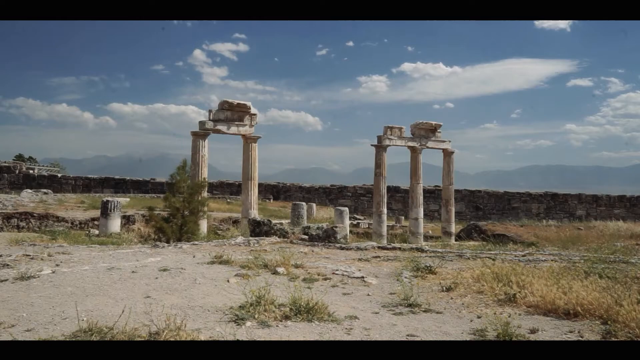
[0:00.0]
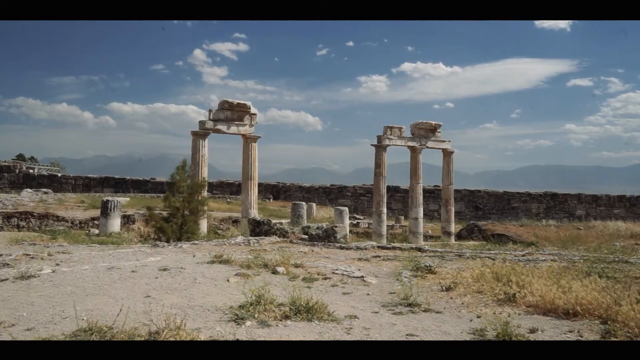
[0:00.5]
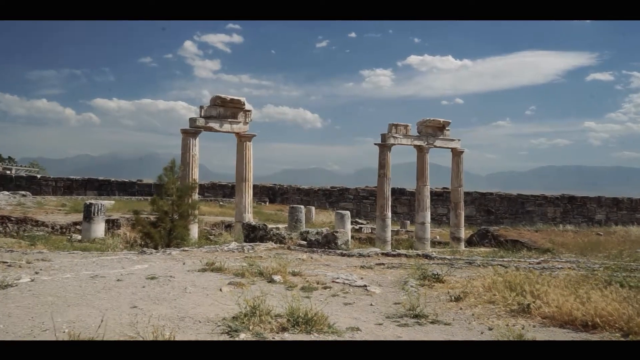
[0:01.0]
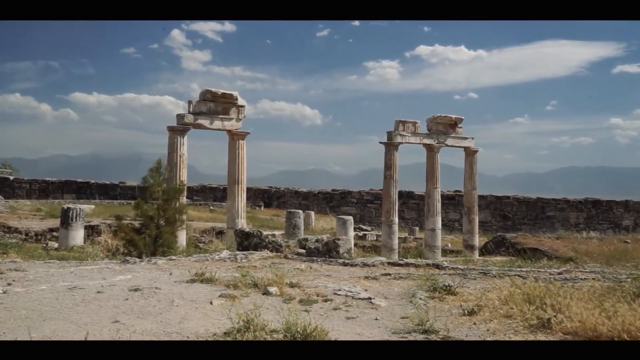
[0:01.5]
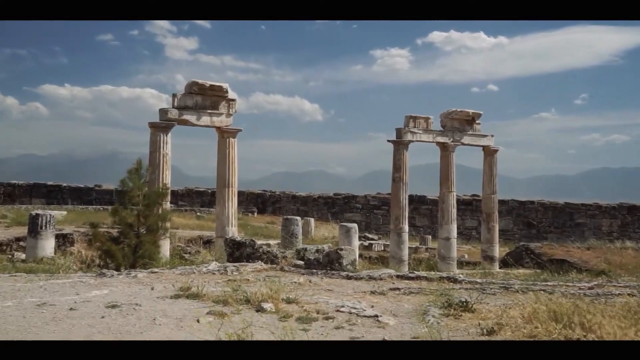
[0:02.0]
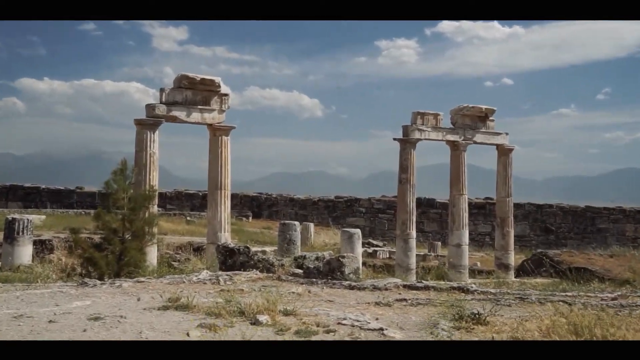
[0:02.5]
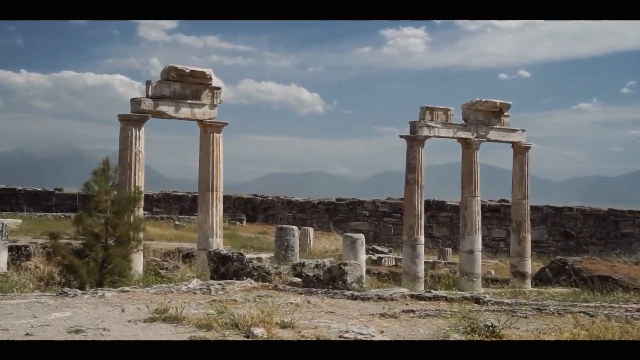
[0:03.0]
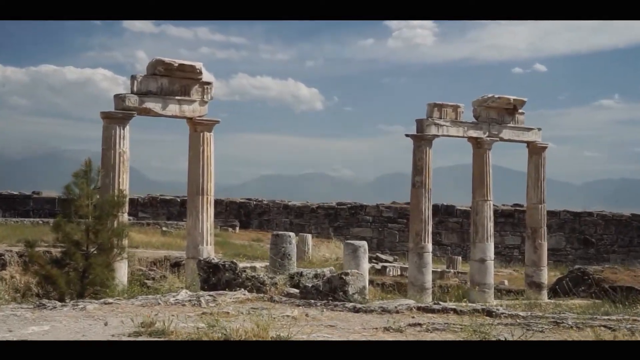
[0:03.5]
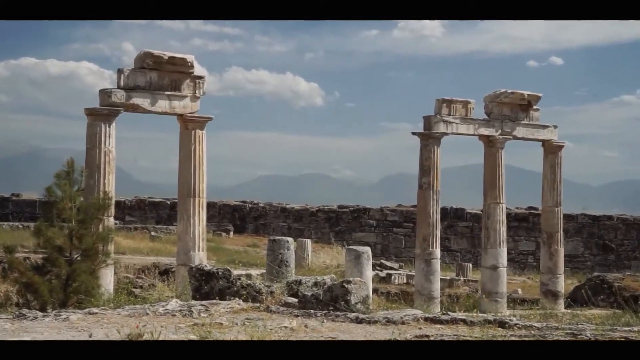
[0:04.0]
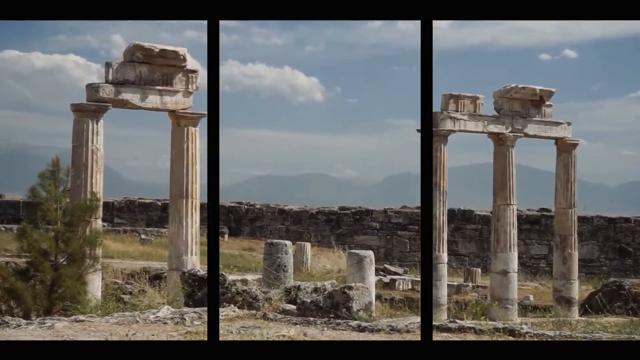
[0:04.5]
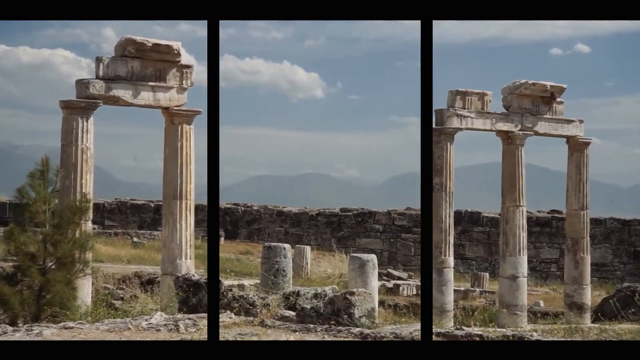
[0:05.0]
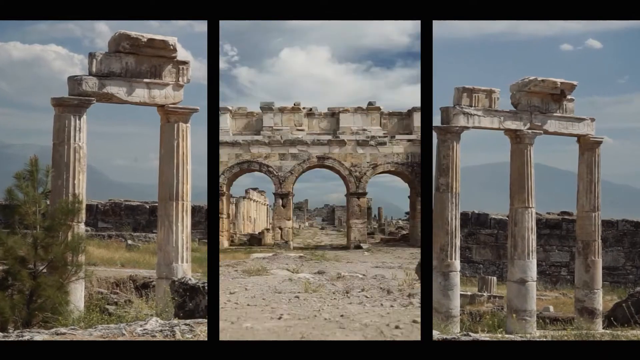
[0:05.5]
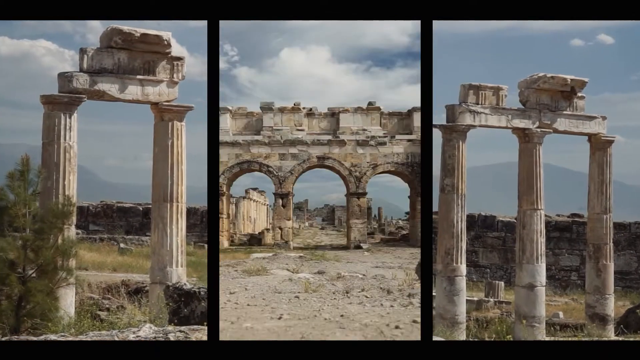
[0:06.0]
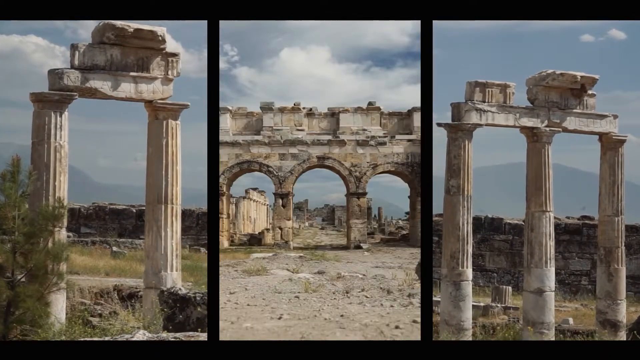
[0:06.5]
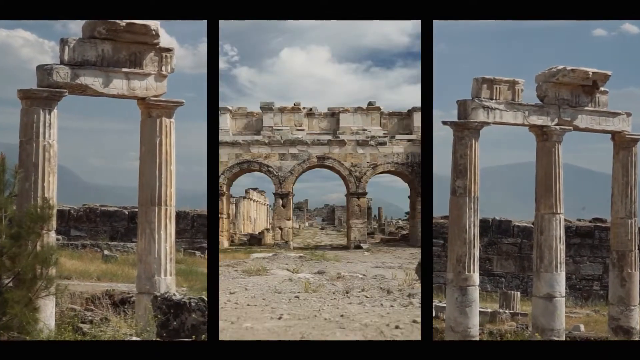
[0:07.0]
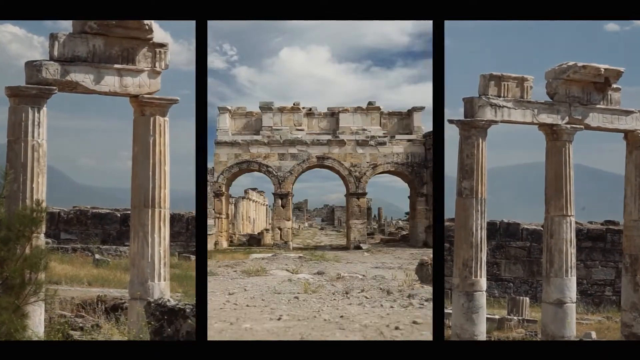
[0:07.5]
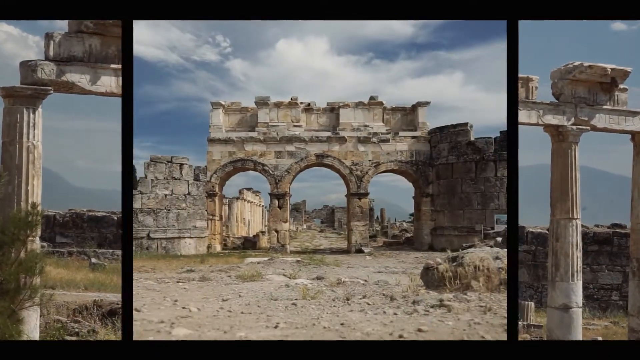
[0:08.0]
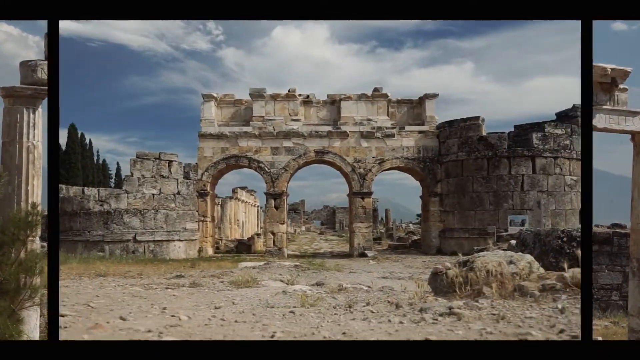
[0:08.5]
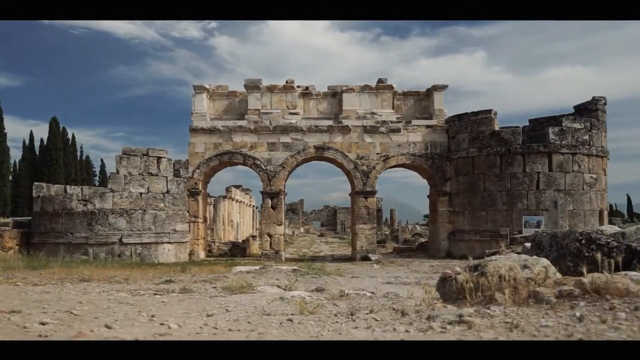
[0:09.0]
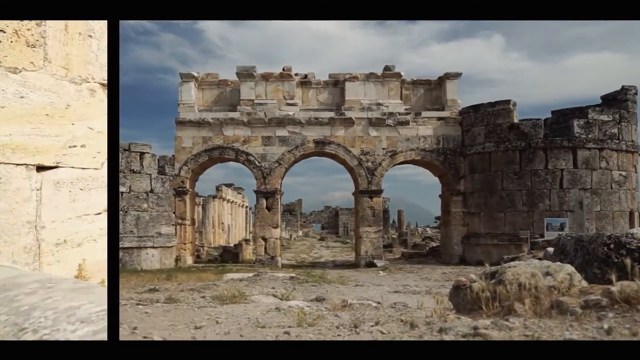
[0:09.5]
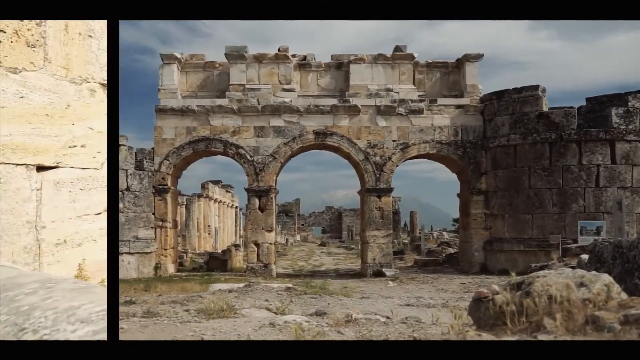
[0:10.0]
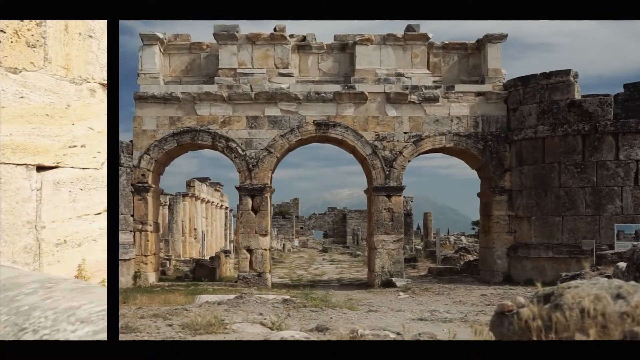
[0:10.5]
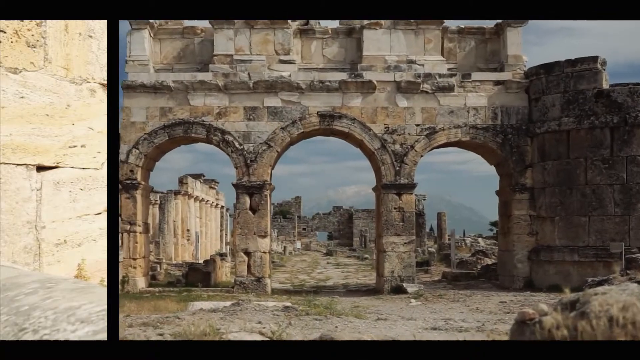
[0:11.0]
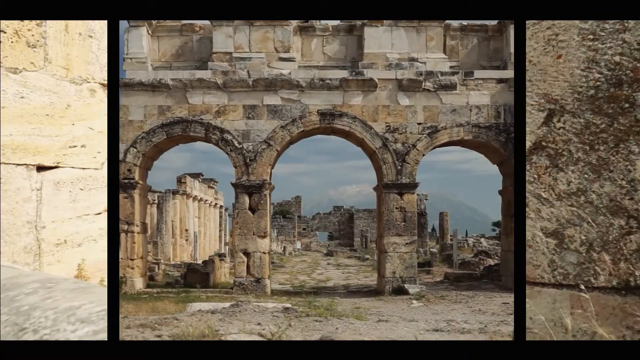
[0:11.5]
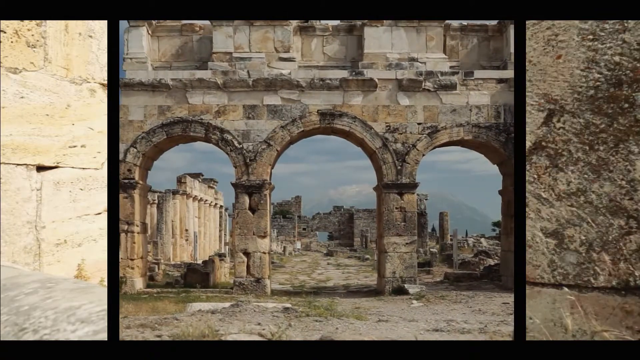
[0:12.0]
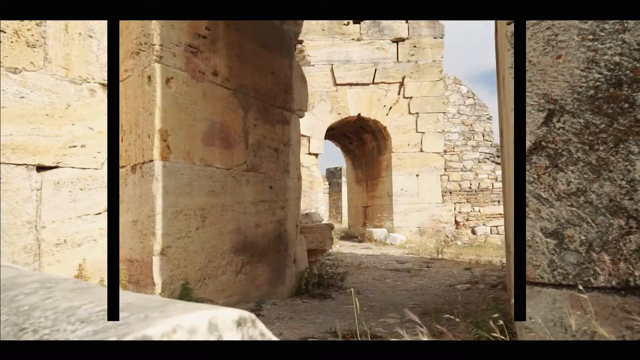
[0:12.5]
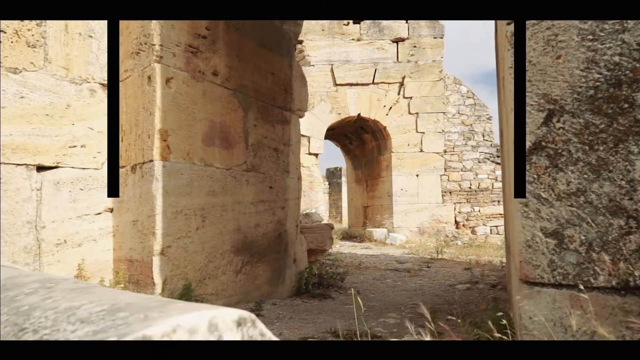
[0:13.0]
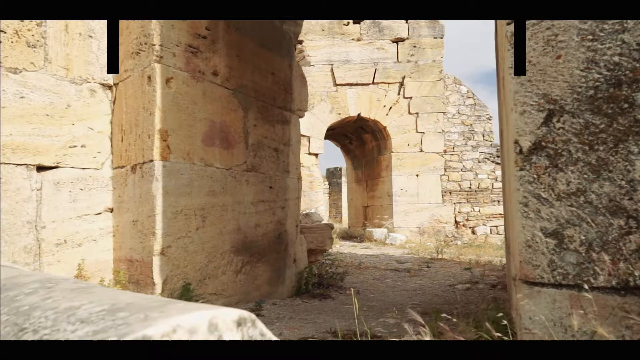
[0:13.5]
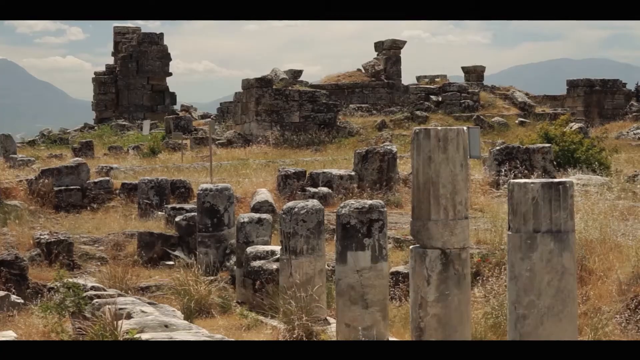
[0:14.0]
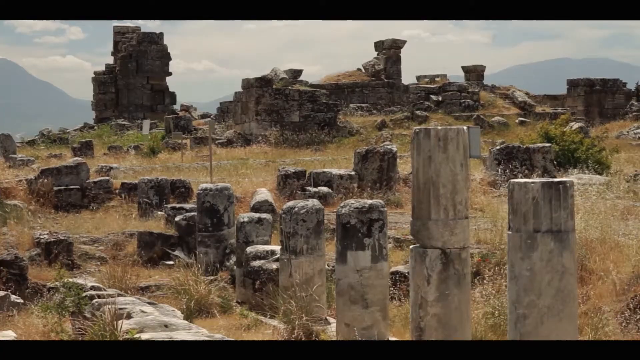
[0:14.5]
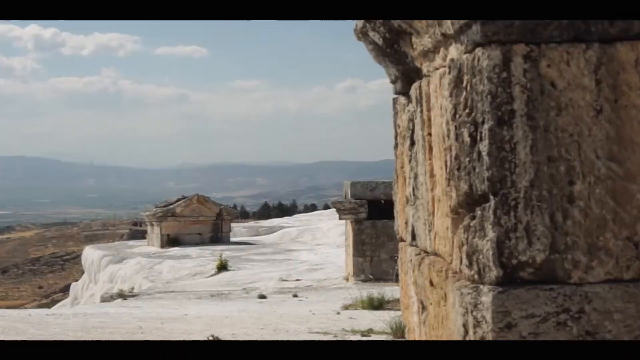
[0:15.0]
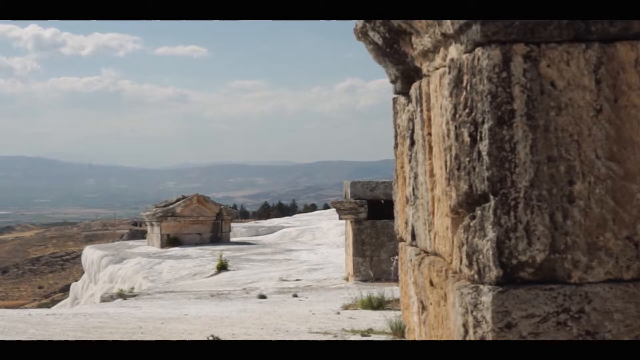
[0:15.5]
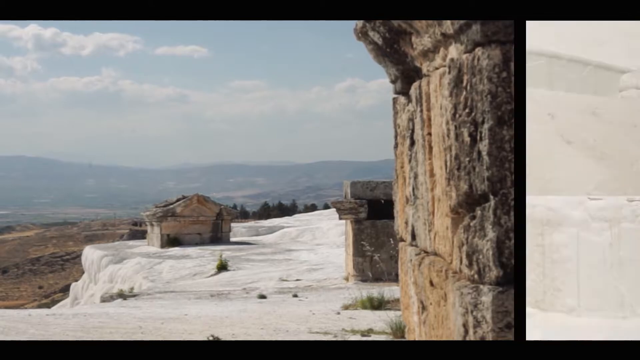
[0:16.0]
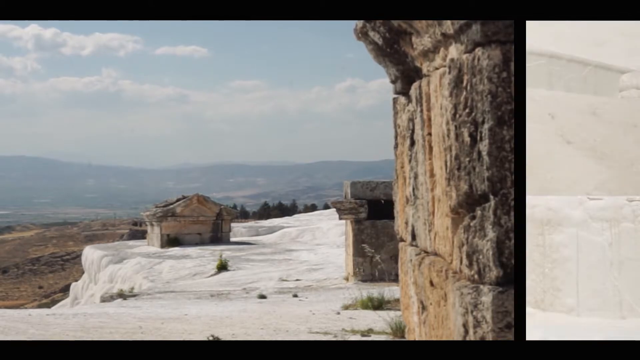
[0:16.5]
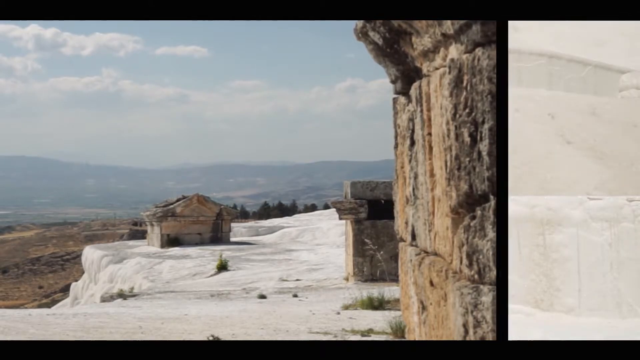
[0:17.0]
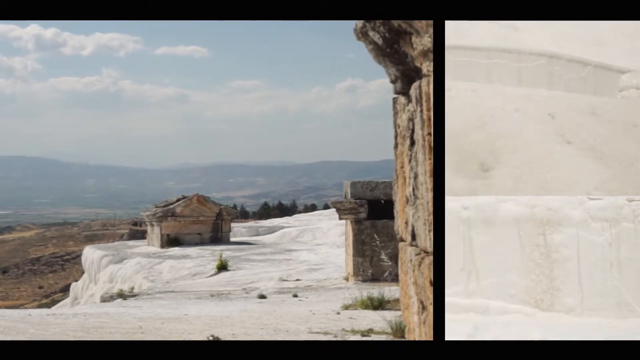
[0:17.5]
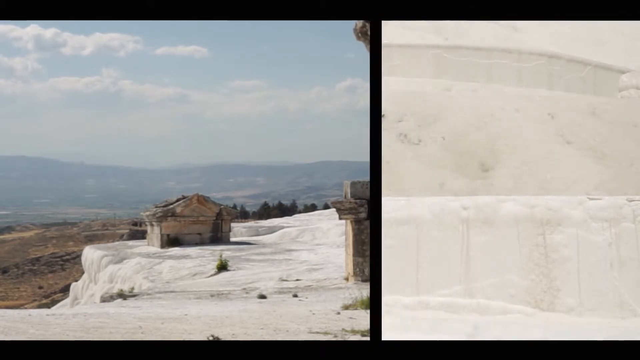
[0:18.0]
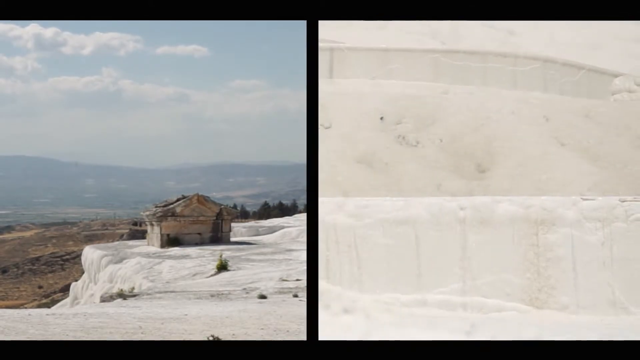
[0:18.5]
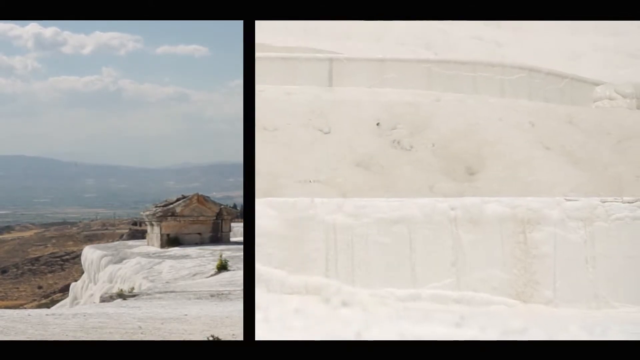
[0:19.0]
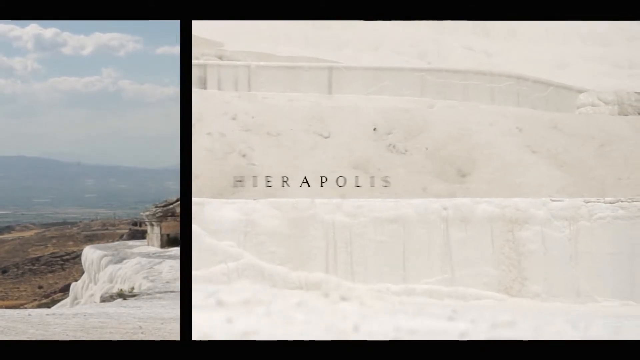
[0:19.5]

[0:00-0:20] The camera closes in on five pillars standing alone that apparently were once part of a large building, then narrows in on more arched doorways and gives different shots of the area of Hierapolis, an ancient site in Turkey where only the stone architecture remains, in ruins. The land is dry and deserted.